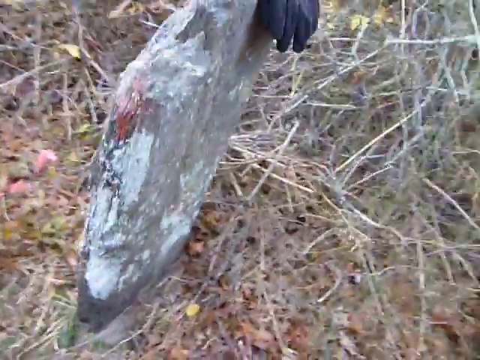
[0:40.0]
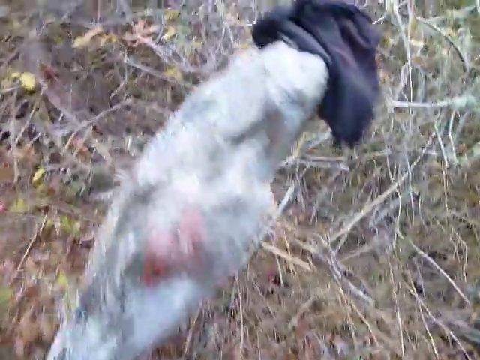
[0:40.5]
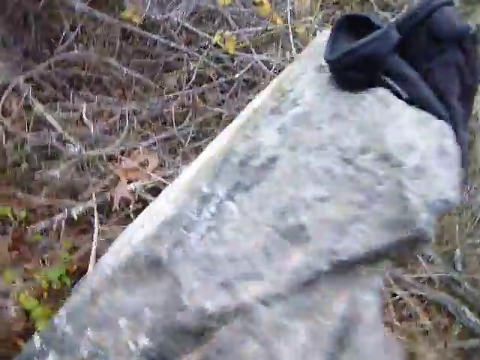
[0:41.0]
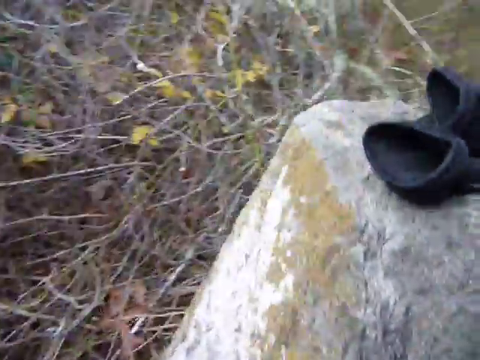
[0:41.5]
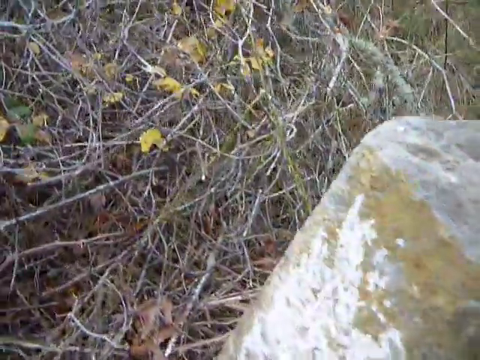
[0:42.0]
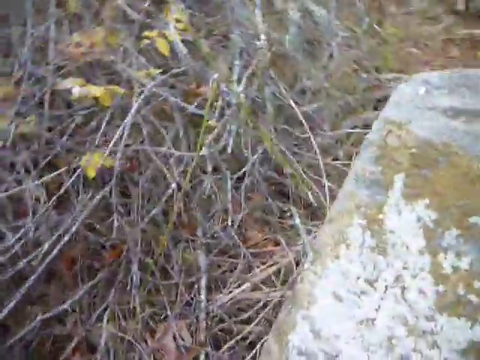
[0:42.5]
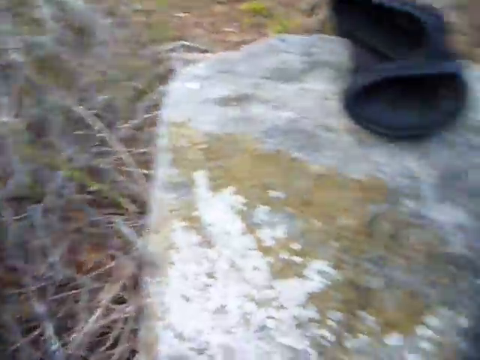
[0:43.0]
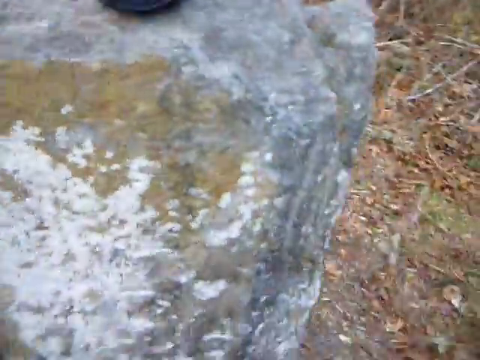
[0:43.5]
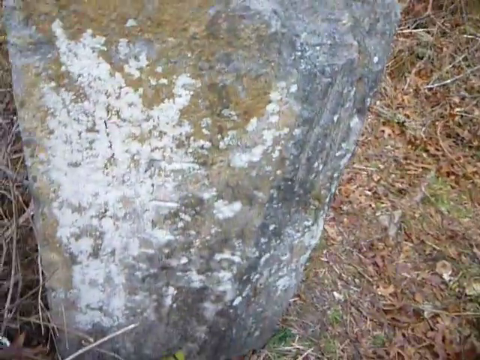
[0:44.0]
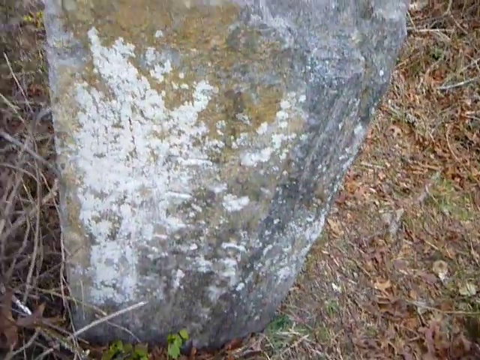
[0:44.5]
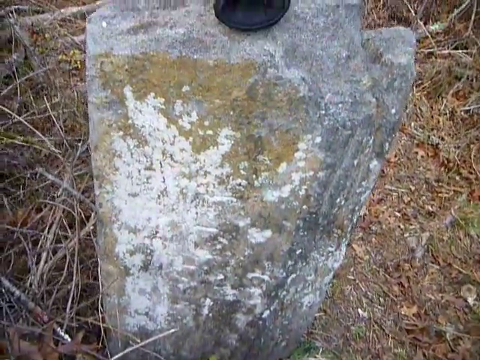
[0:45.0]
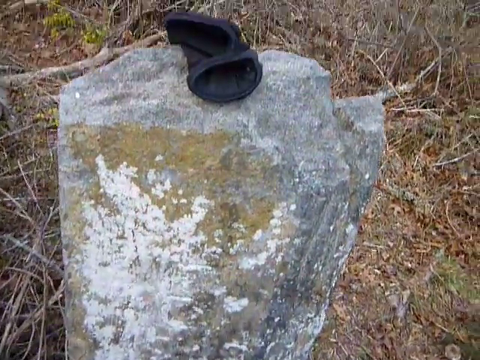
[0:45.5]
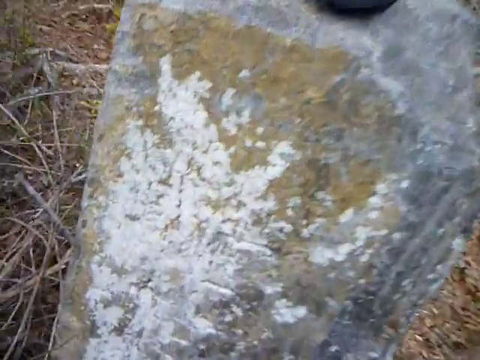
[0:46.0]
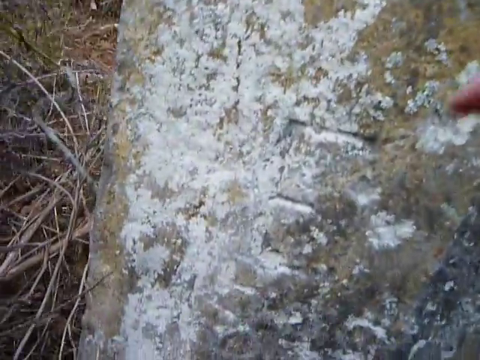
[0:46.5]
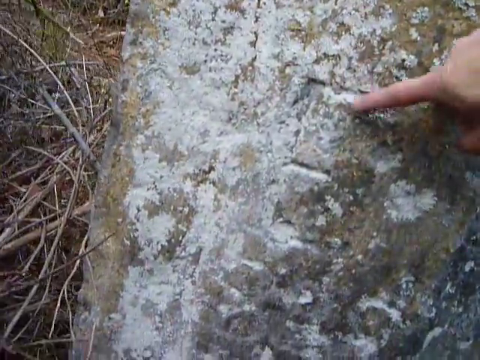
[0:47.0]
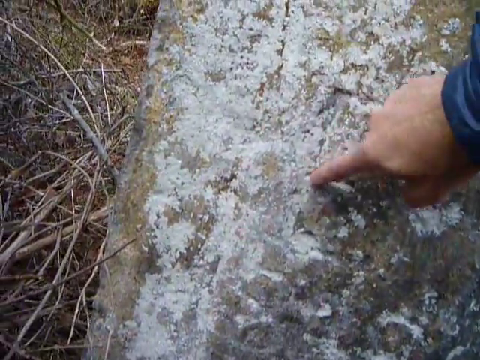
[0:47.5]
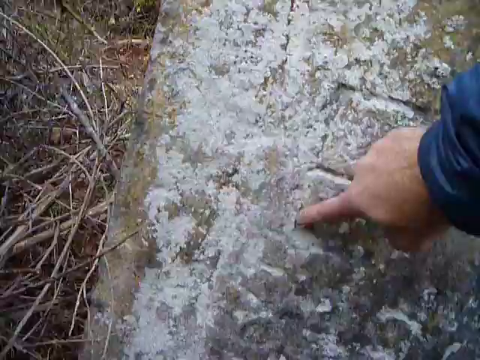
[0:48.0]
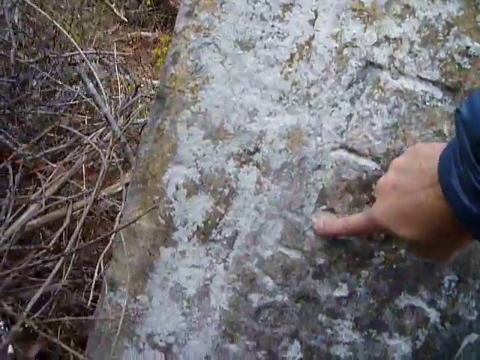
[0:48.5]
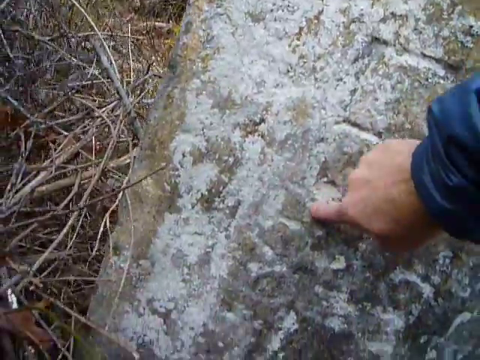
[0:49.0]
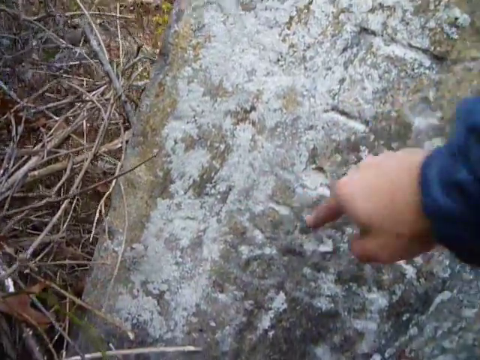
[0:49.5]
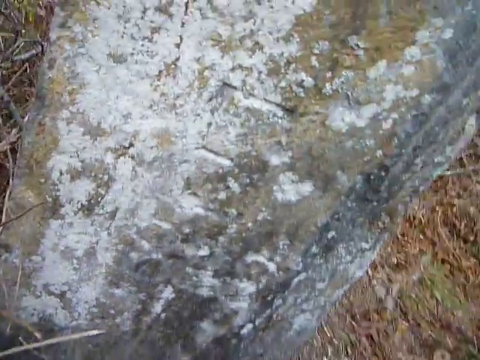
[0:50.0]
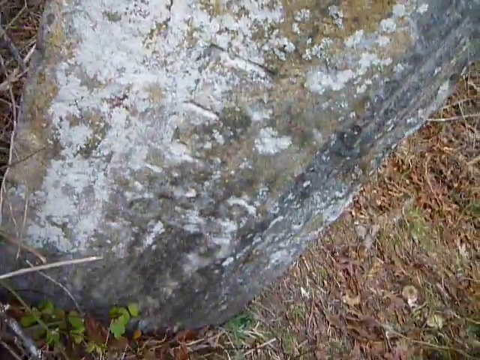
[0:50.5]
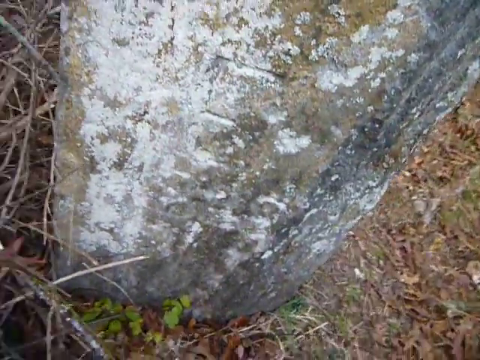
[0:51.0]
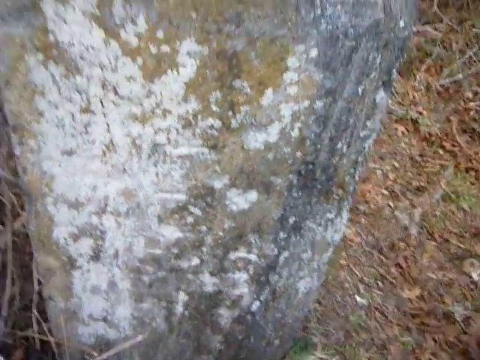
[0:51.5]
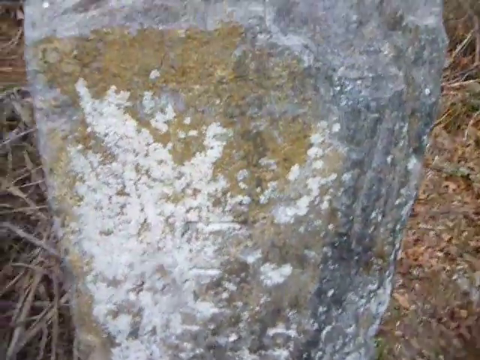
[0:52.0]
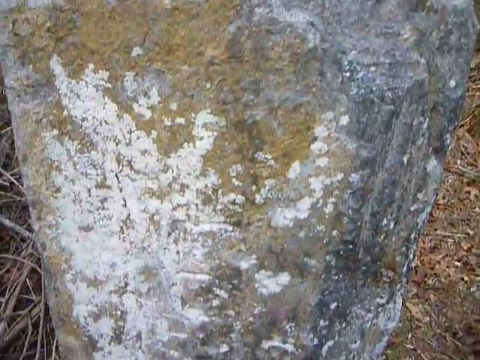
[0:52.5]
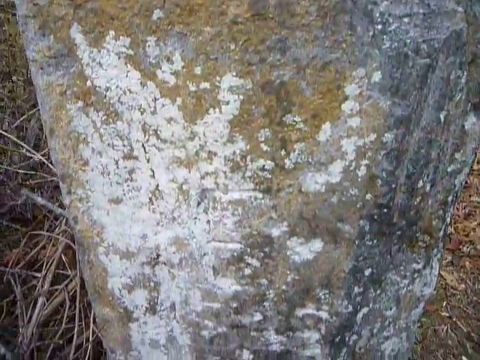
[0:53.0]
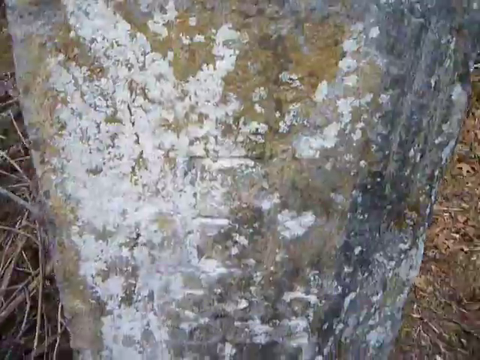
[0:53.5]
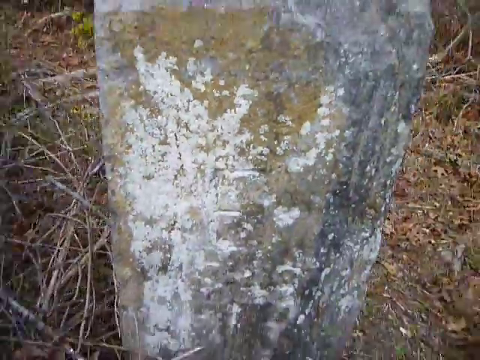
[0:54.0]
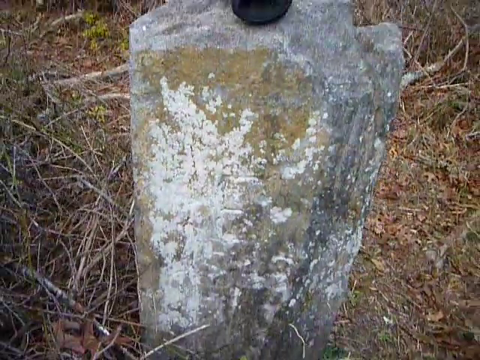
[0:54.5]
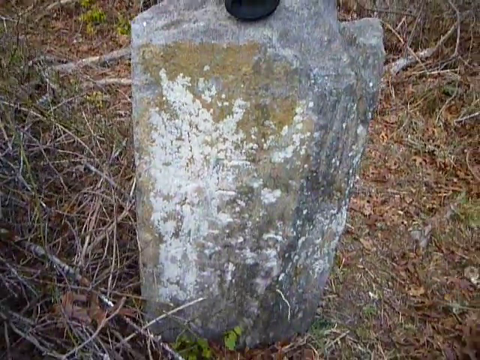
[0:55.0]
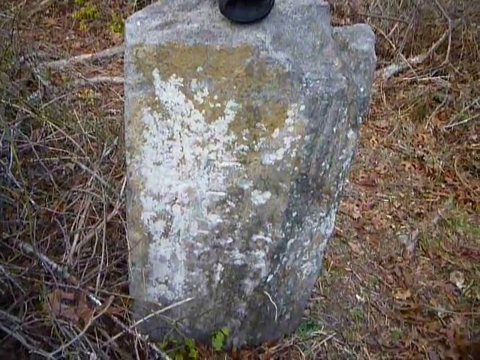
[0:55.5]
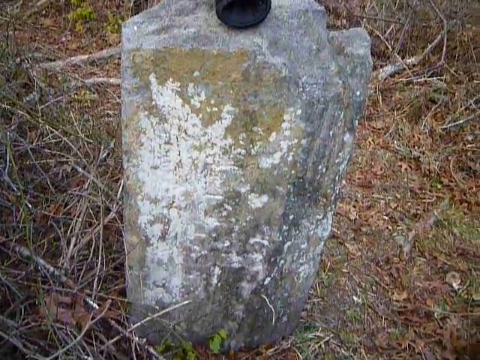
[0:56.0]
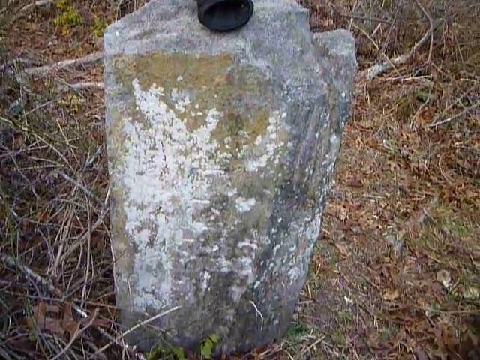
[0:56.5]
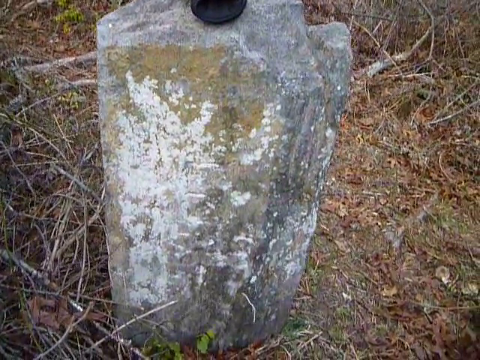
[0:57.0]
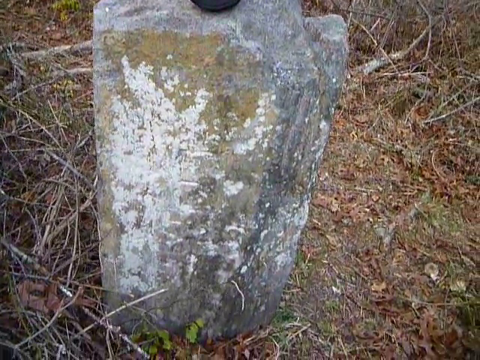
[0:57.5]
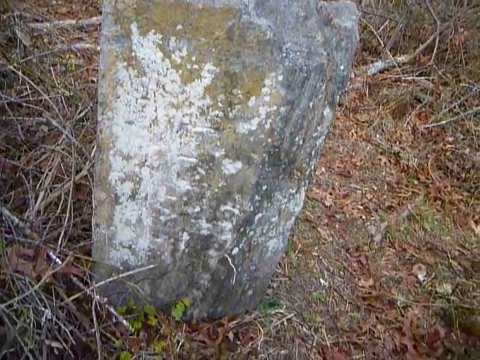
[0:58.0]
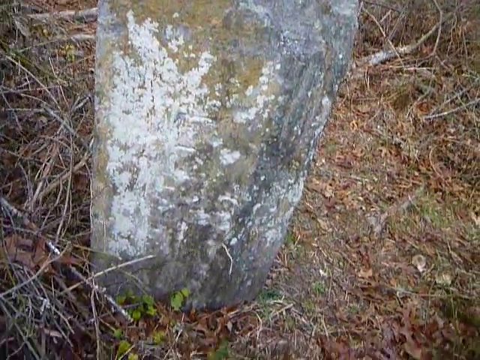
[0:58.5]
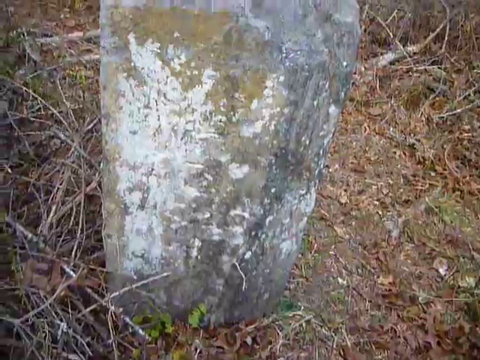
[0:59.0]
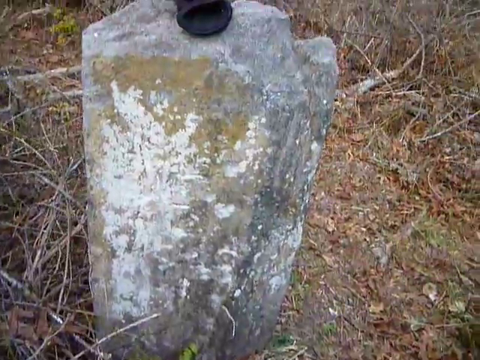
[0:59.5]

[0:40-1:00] The same tombstone is filmed on the back, which shows nothing significant: no inscribed text, and the surface is not smooth. It is possibly a simple stone whose flat, elongated shape suggests something else; it is not carved or clean, just a flat stone in the middle of nowhere. On the back there is a very large white spot and another reddish or other color that contrasts with the gray. The person filming gets closer to this side, revealing some marked lines lower down and some small holes. The lines form no discernible words or text; there are only marked lines on this side of the tombstone.